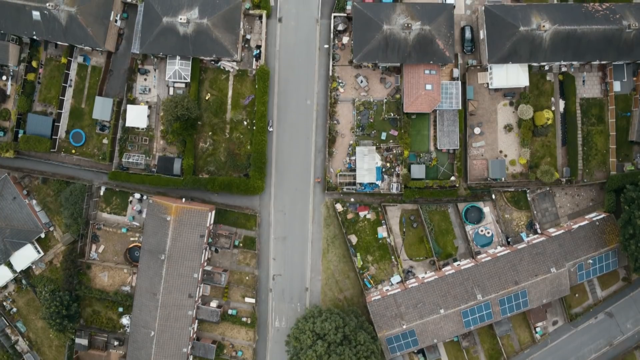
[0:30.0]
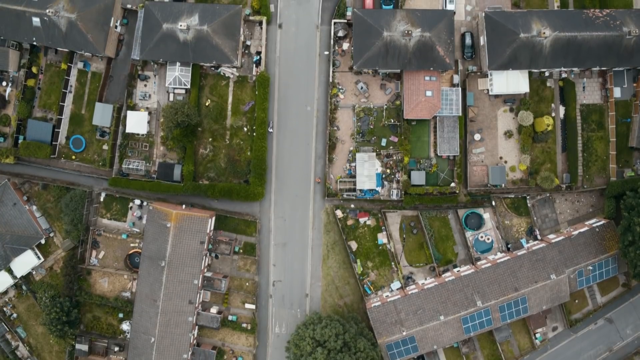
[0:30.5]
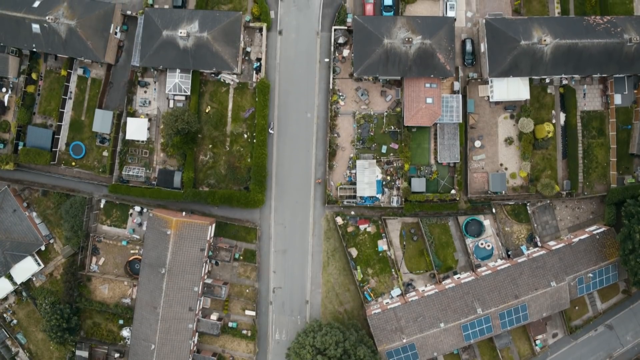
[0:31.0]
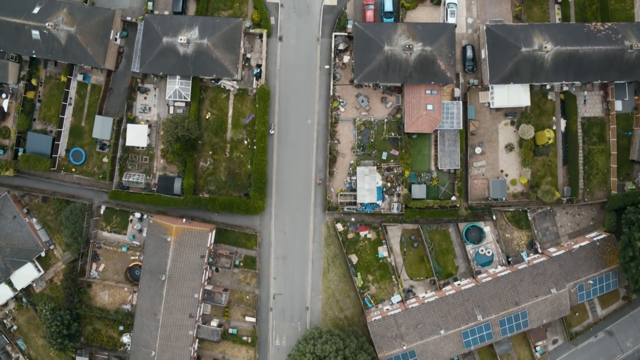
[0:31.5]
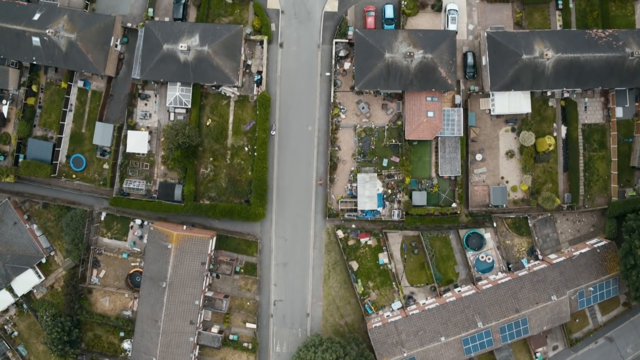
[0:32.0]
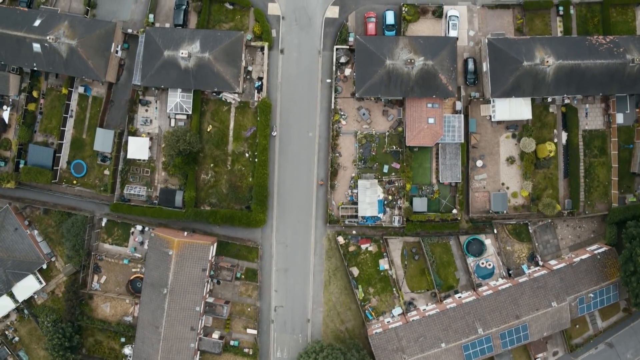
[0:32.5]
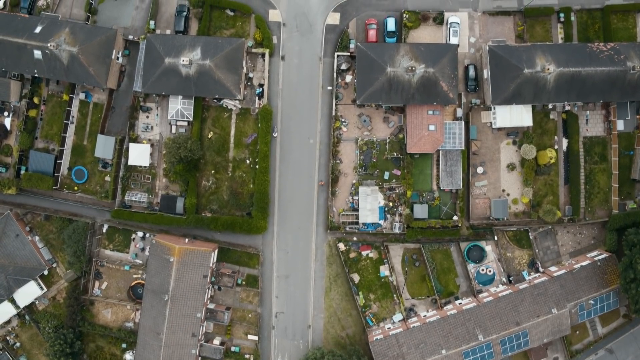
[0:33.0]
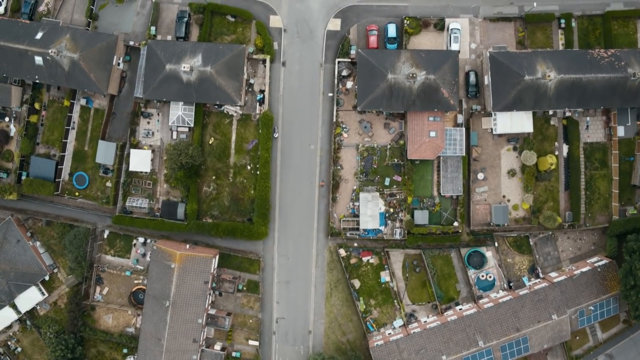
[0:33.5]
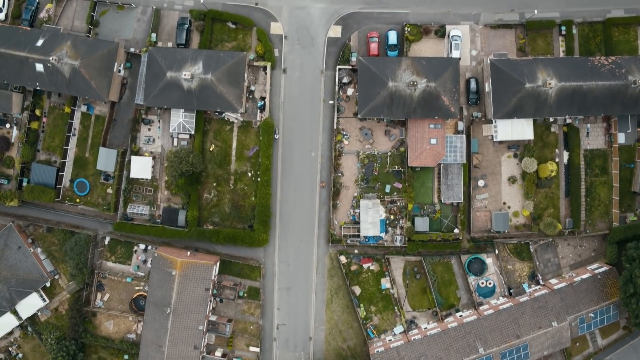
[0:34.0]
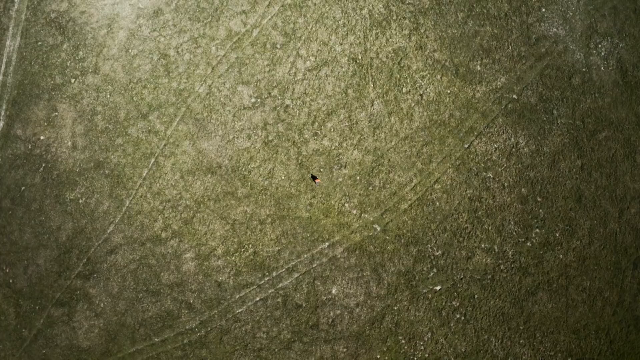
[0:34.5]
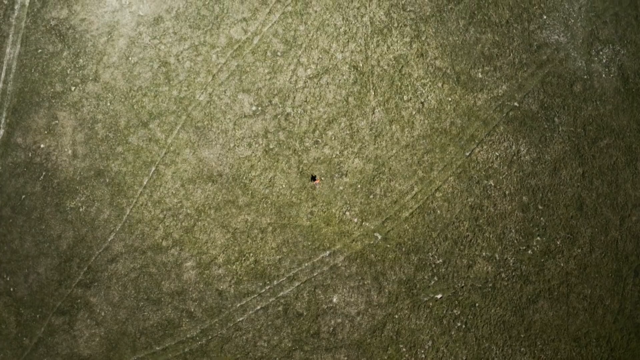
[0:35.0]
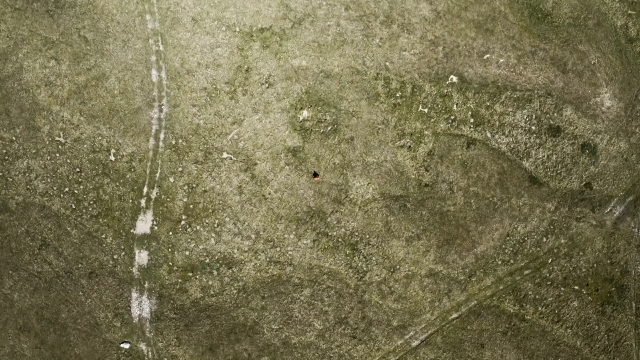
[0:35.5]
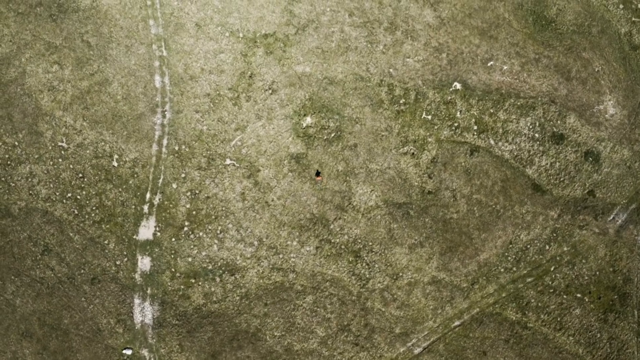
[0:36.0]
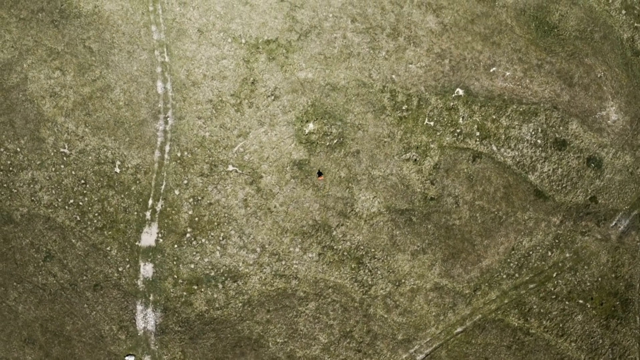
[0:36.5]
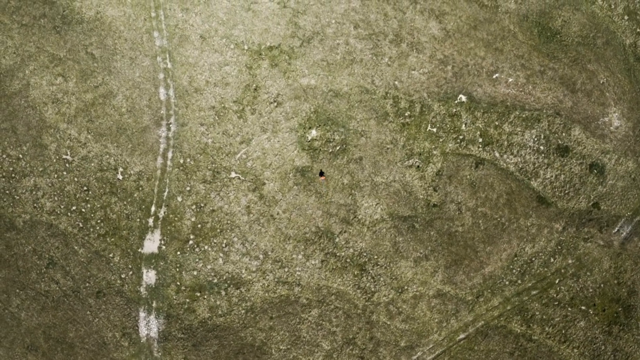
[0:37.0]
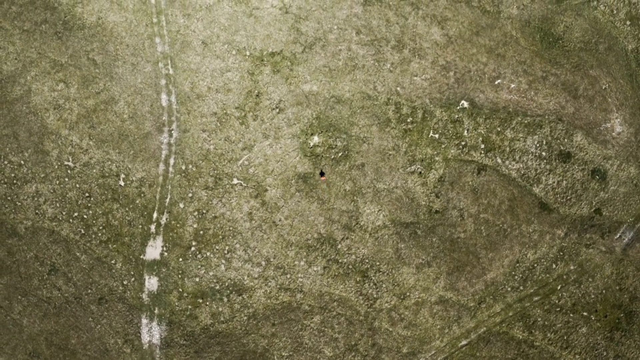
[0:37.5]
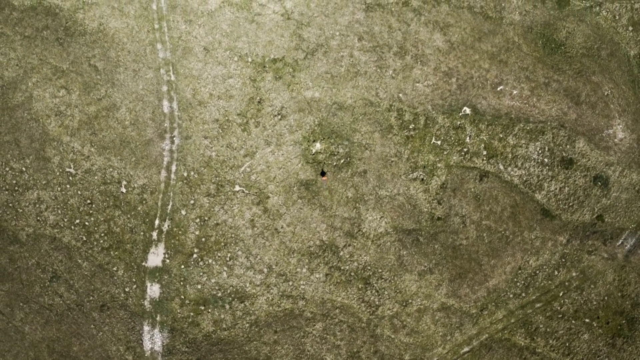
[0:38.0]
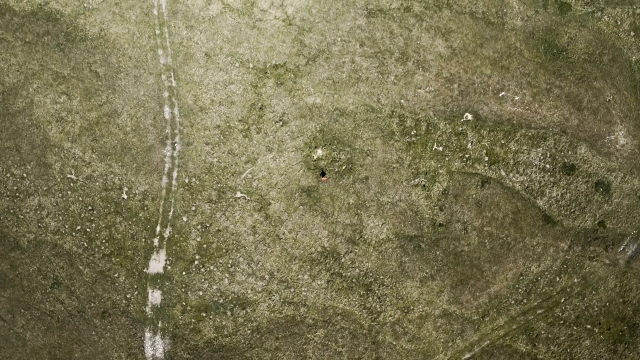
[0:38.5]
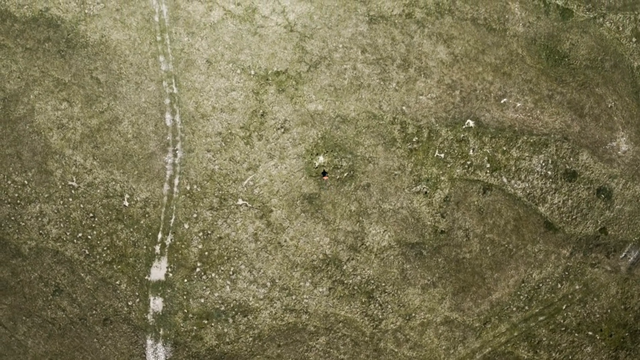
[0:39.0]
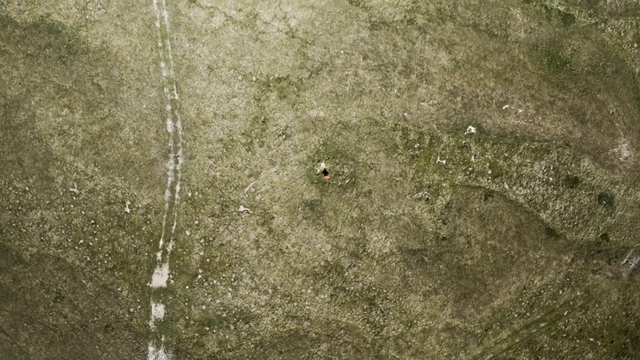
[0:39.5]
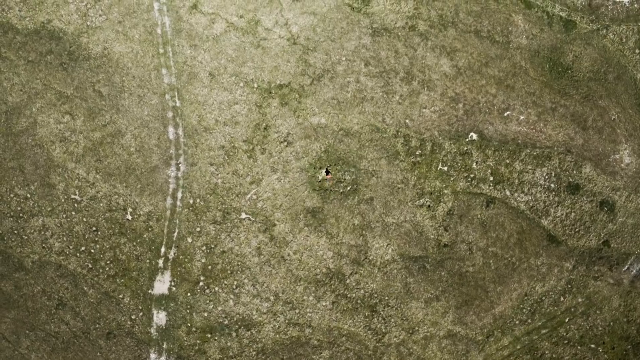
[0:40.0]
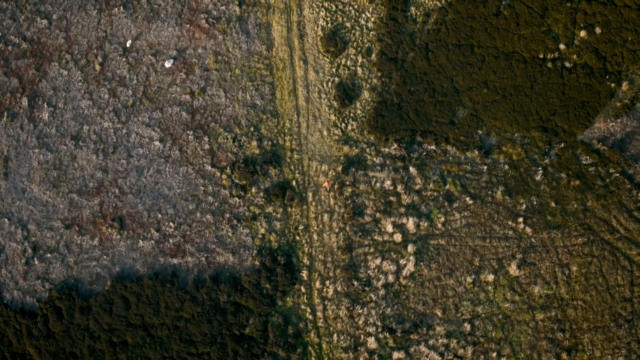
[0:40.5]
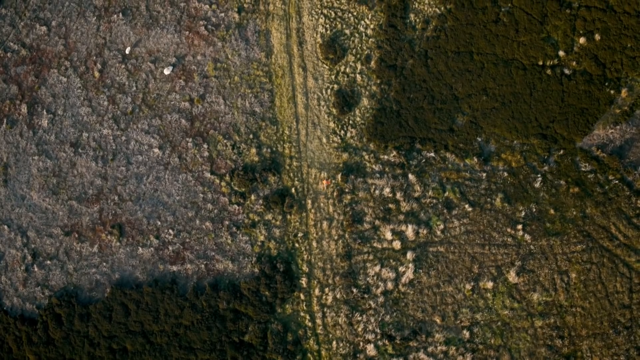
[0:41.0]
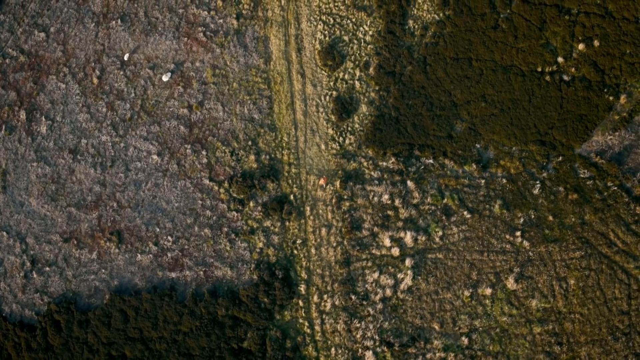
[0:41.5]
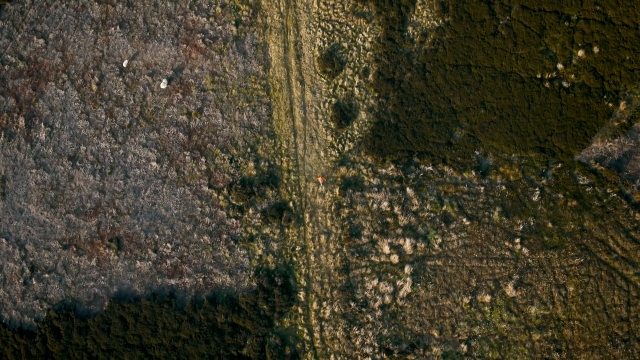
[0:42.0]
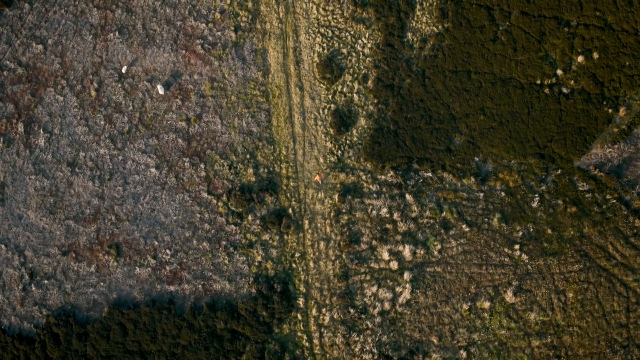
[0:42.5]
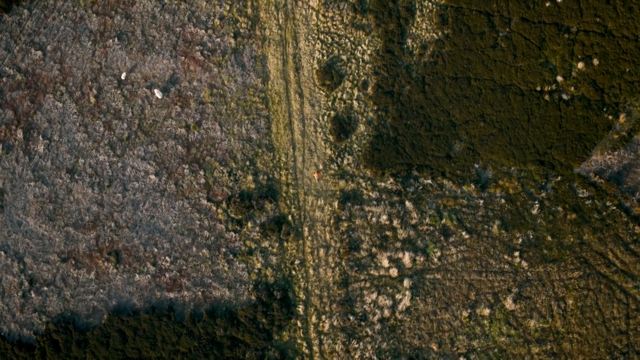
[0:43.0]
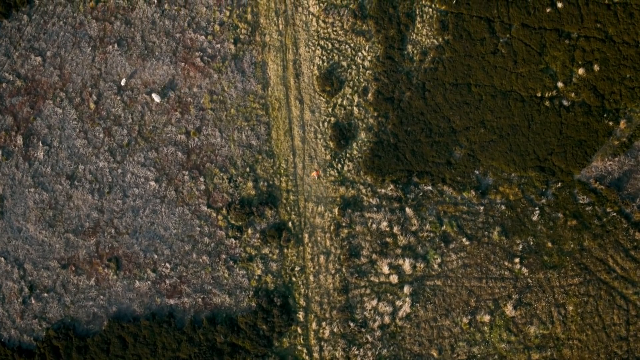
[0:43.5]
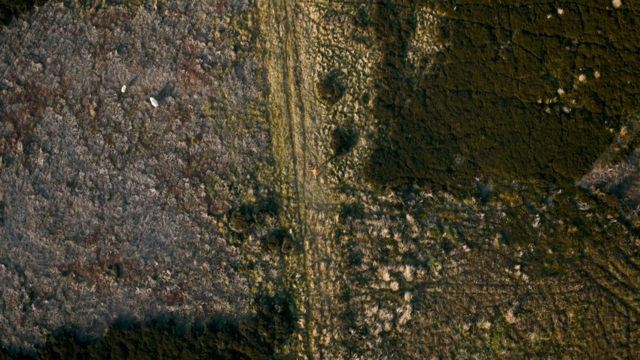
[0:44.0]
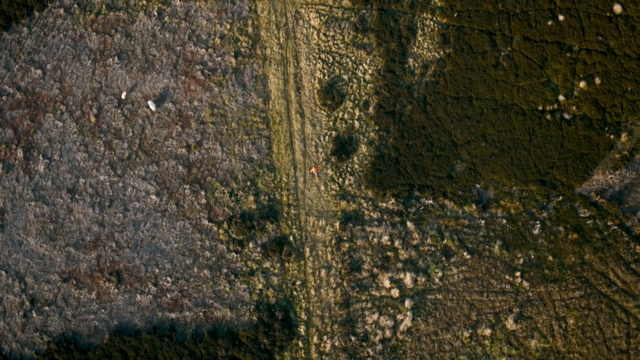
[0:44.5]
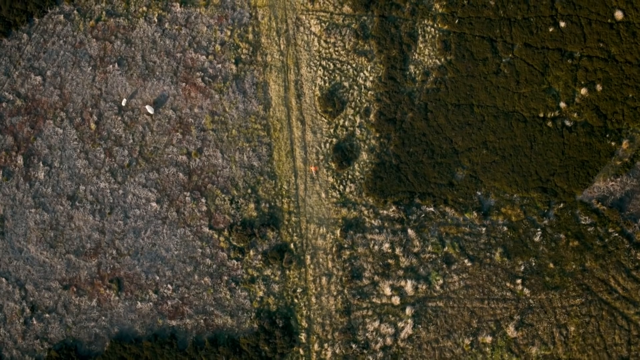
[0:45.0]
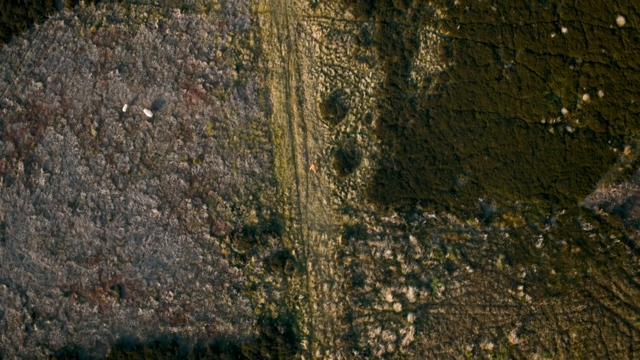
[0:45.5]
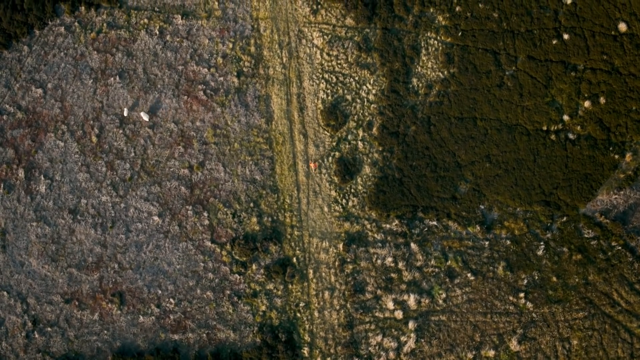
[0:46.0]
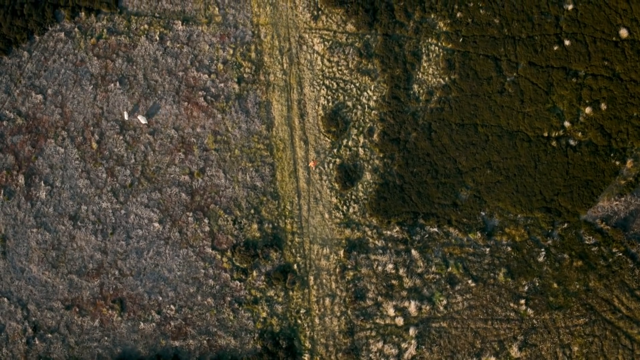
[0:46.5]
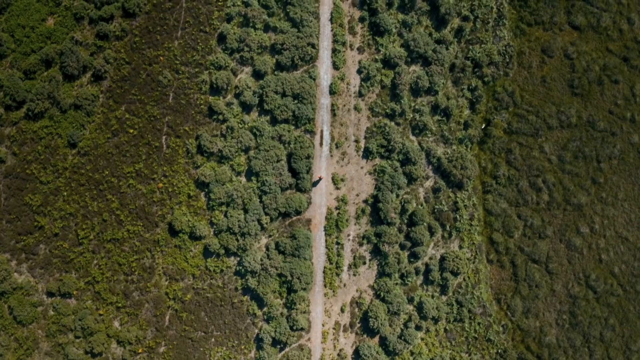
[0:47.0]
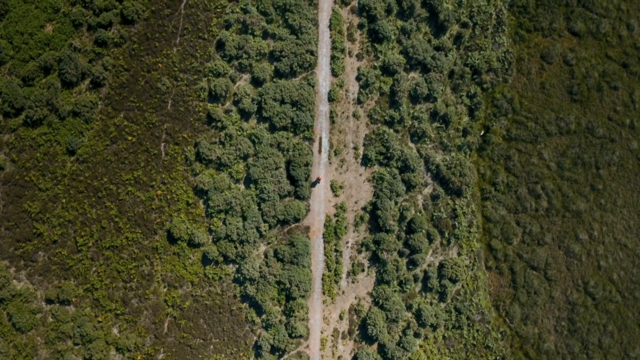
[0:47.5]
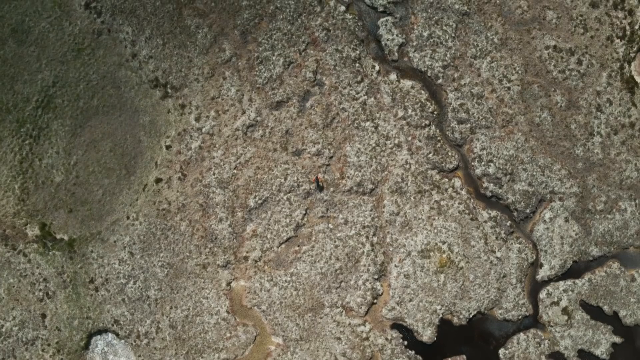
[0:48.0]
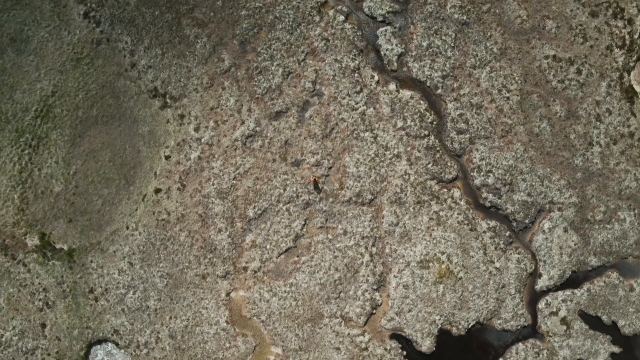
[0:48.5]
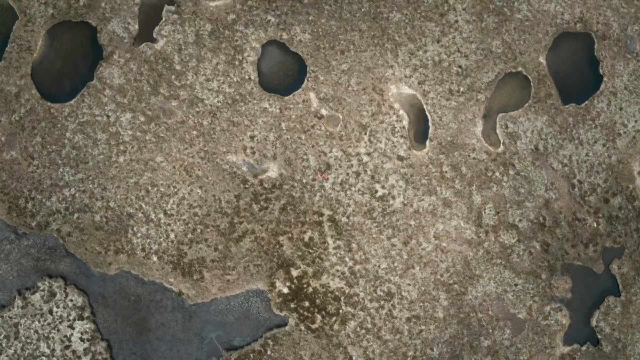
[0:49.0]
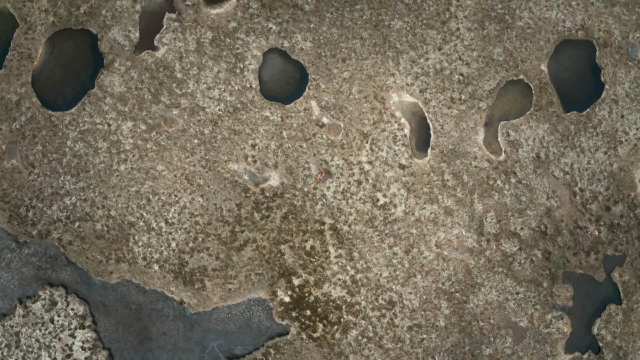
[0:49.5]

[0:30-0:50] Shot from above, probably by some type of drone, the camera looks straight down on houses from what seems to be about 50 feet up. The roofs are hip-style. Below the roofs are lower buildings, suggesting the buildings are apparently at least two or three stories tall. There are fences, backyards with green grass, and swimming pools. The camera pans upwards as though whatever is recording is flying in a straight line. The view then switches to a couple of different landscapes where the ground is pretty flat and very green-yellow. A couple of tiny moving figures, apparently people of unclear gender, look like they are running, heading straight up in the shot, possibly in some kind of marathon. They are seen running in different scenes, though it could be just one person.